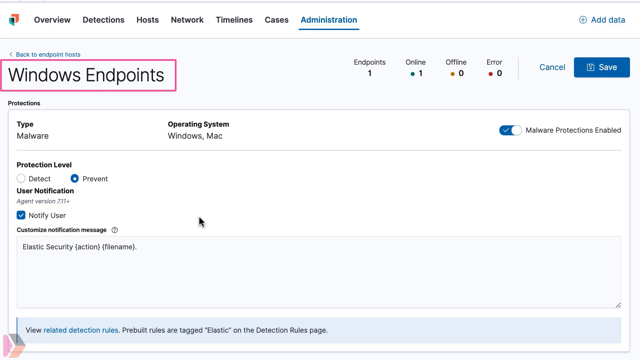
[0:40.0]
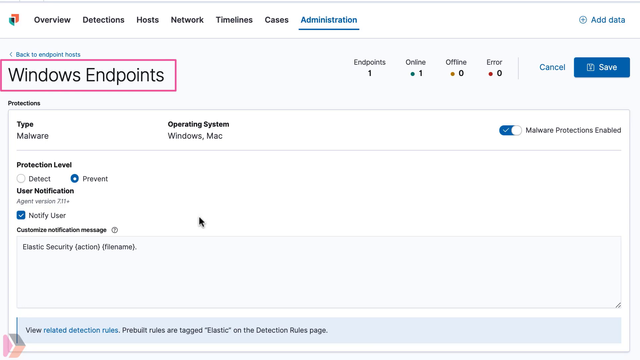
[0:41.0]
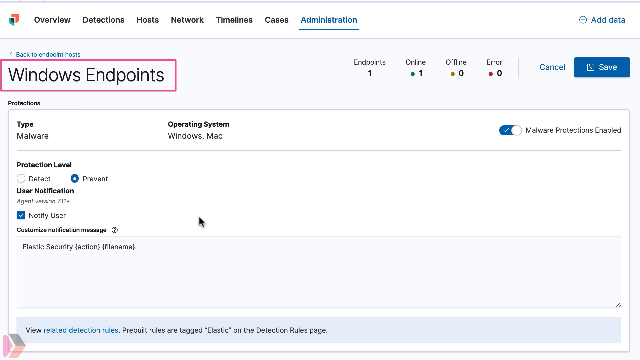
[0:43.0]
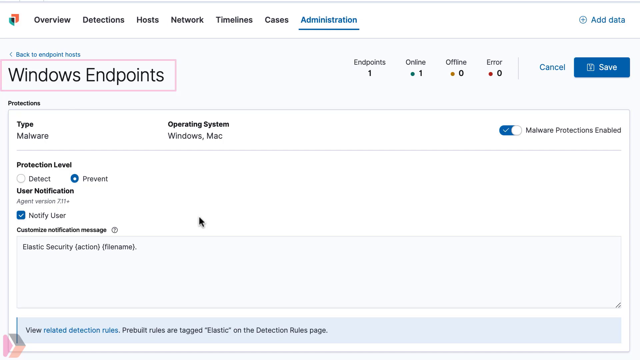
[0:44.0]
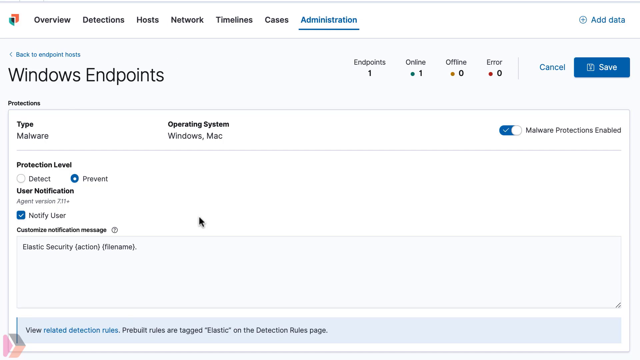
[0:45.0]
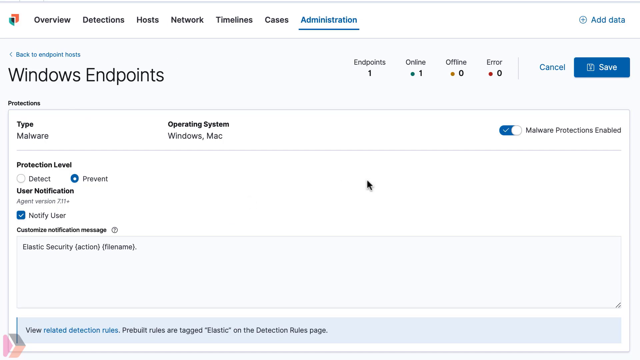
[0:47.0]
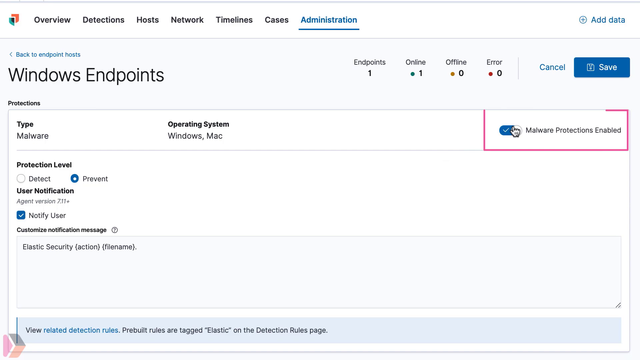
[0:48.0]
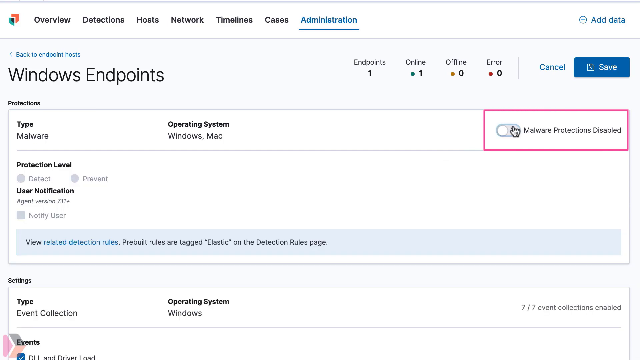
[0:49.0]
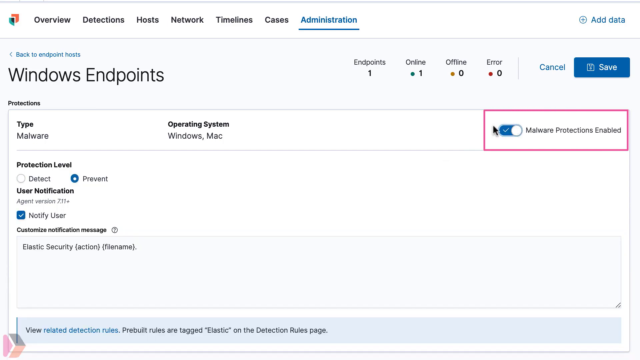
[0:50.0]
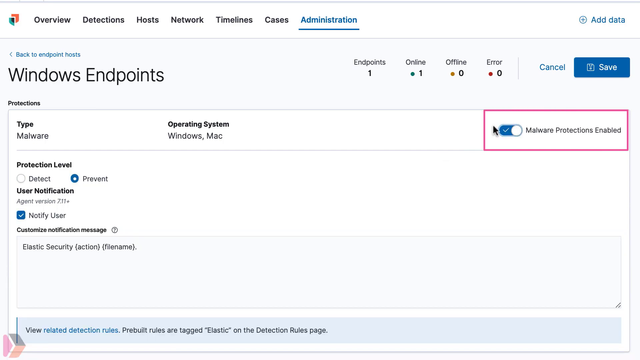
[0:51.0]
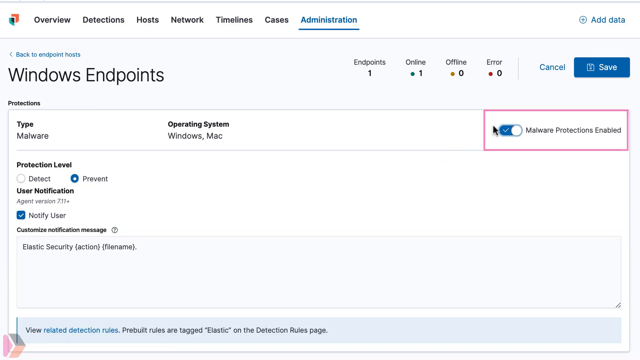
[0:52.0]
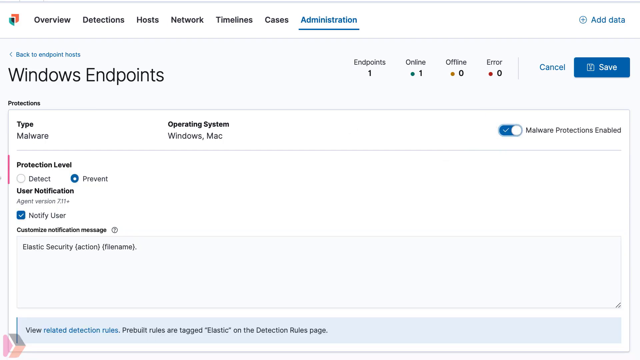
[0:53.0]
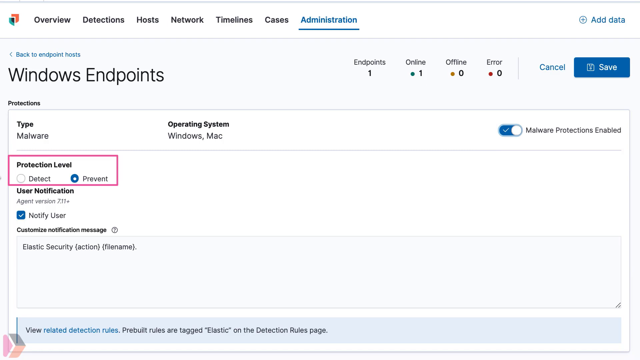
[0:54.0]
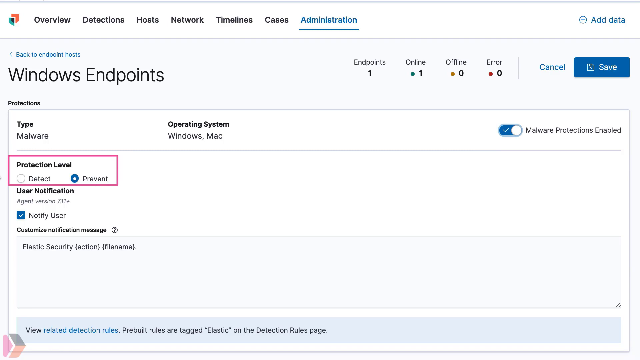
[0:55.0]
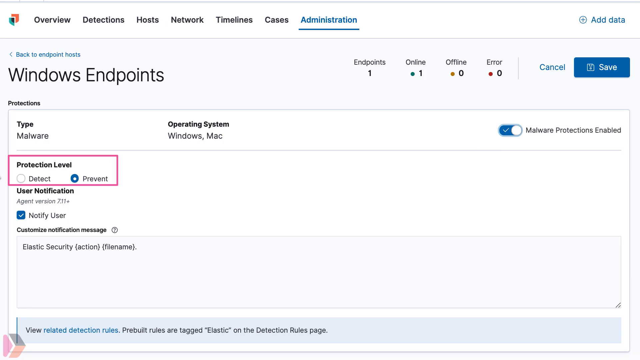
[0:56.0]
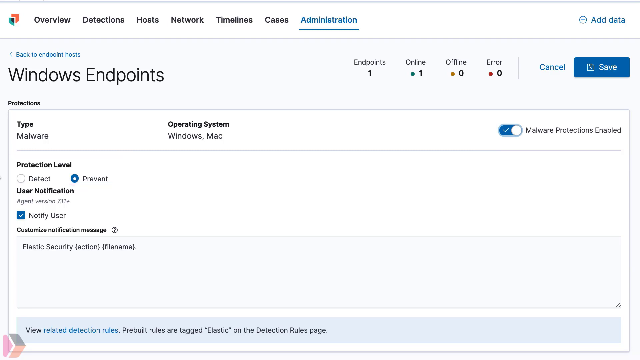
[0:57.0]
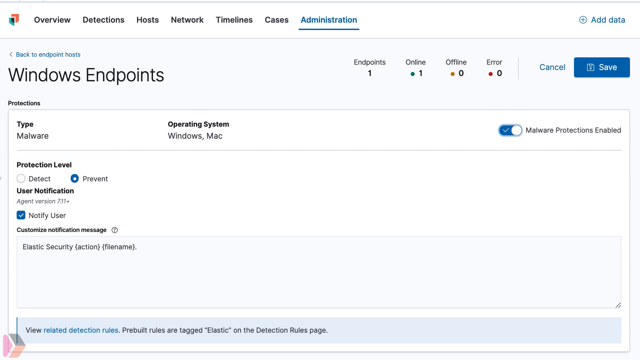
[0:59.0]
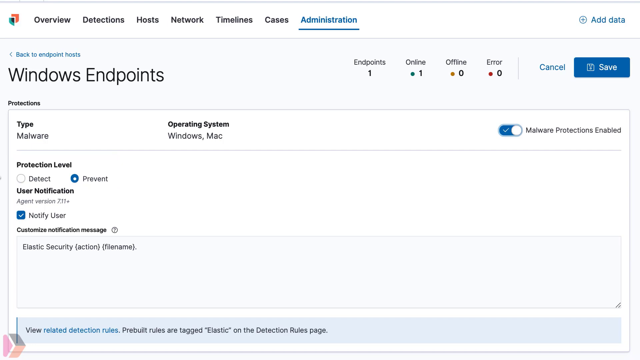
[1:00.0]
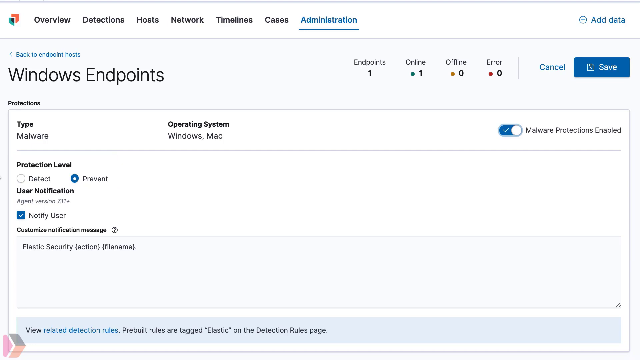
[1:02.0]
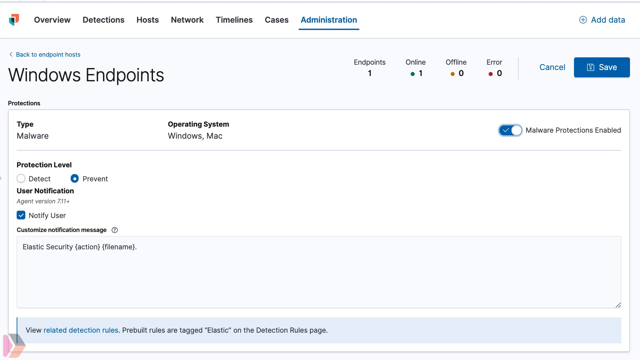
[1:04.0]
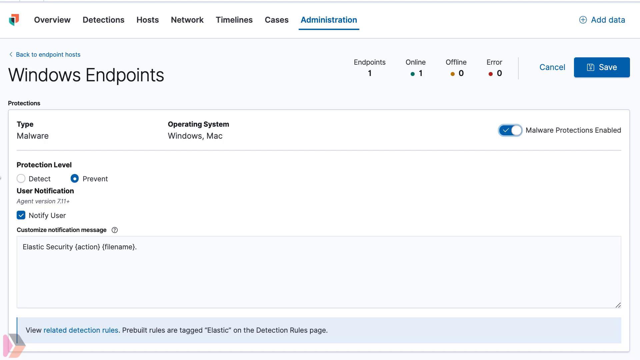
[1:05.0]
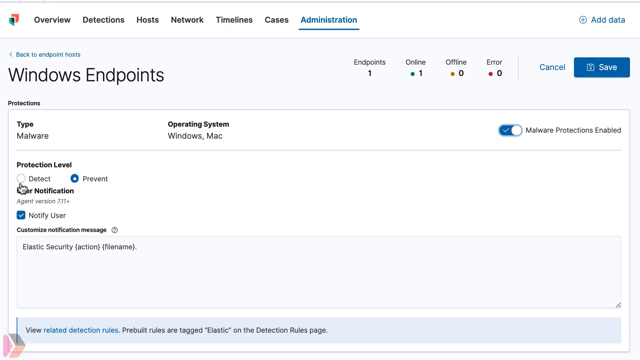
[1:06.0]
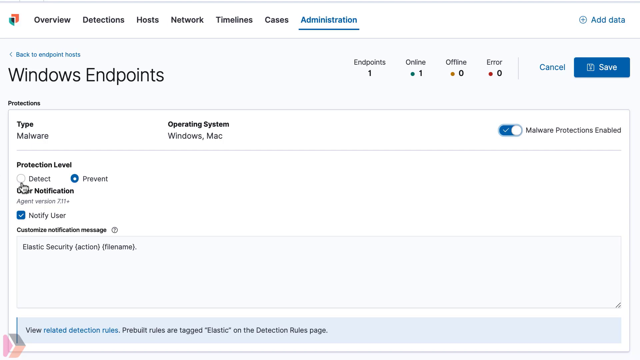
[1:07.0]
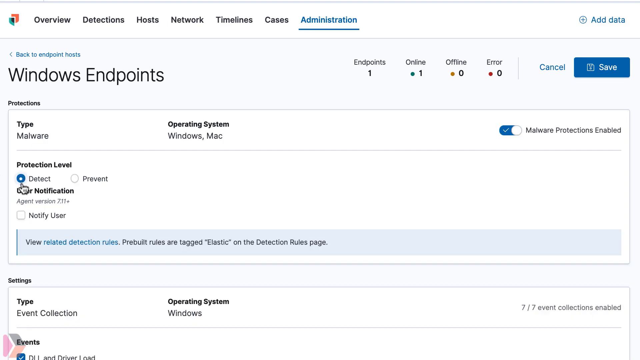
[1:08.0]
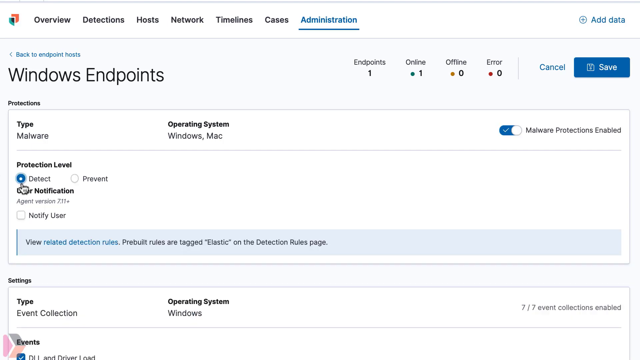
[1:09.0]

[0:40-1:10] The screen starts with "Windows Endpoints", which has a pink rectangle around it, still on the administration tab. Underneath is a larger box with "Protection" at the top. A line within the box reads "Type Malware", and to the right, "Operating System Windows, Mac". On the far right, "Malware Protections Enabled" has a blue checkmark icon showing it is enabled. The protection level is set to prevent, with user notification set to notify the user, and the text "Elastic Security Action" appears. An arrow scrolls up and highlights the Malware Protection Enabled area, then comes down and highlights the "Protection Level" box in pink. Underneath is "Protection User Notification". The protection level is "Prevent"; "Detect" is right beside it, but Prevent is checked. The view goes back up to highlight Windows Endpoints with the Prevent protection level checked.